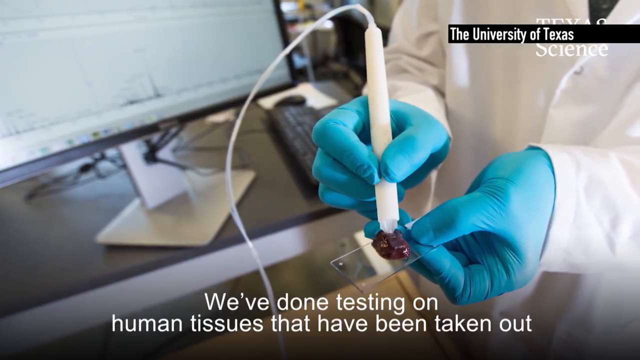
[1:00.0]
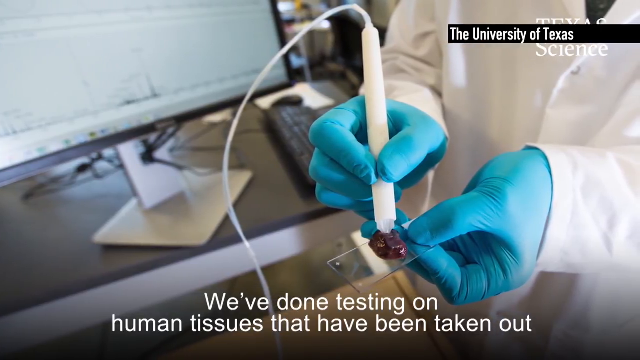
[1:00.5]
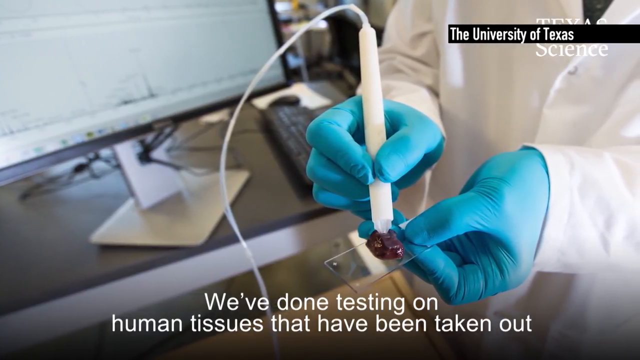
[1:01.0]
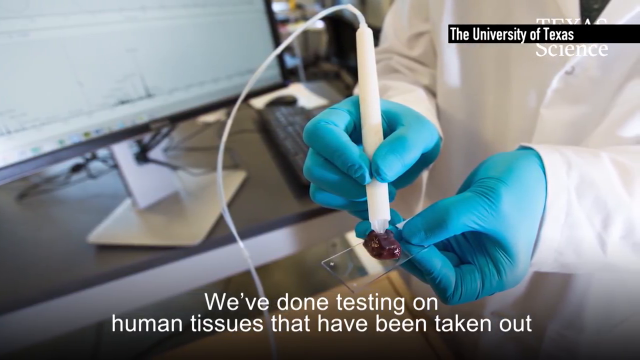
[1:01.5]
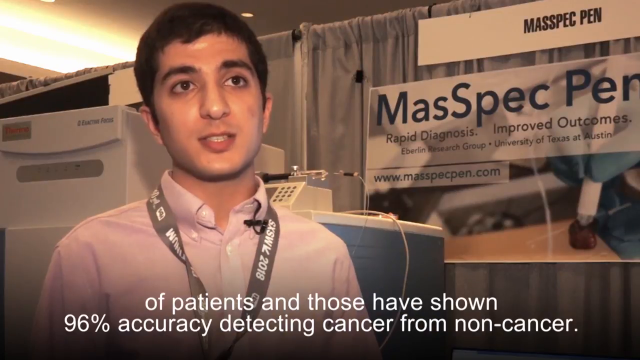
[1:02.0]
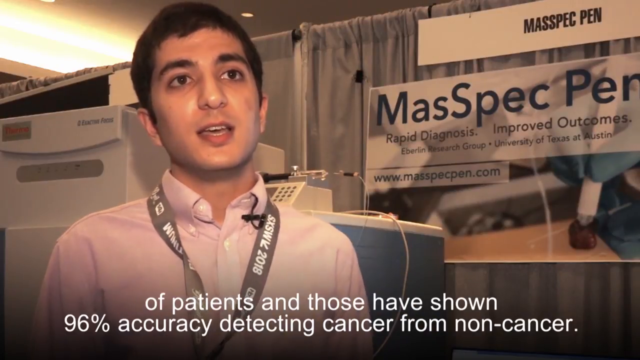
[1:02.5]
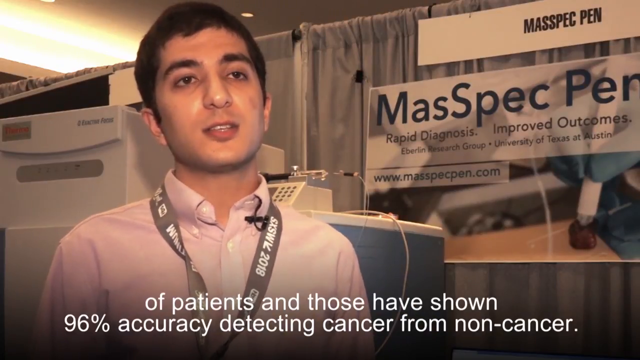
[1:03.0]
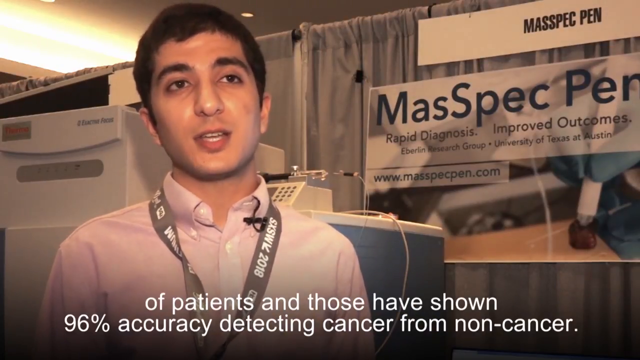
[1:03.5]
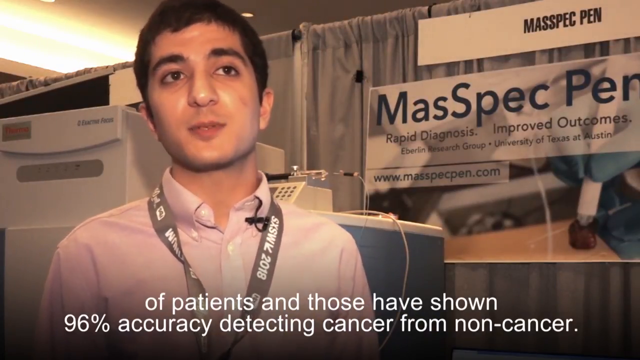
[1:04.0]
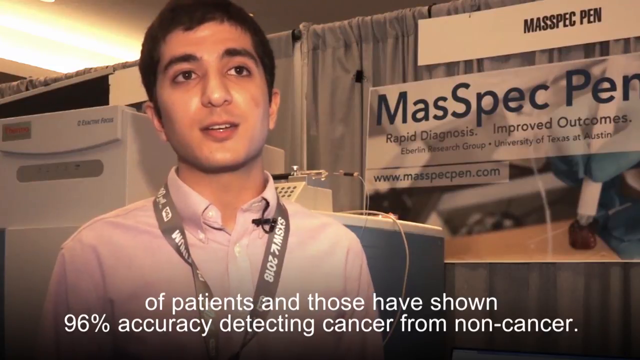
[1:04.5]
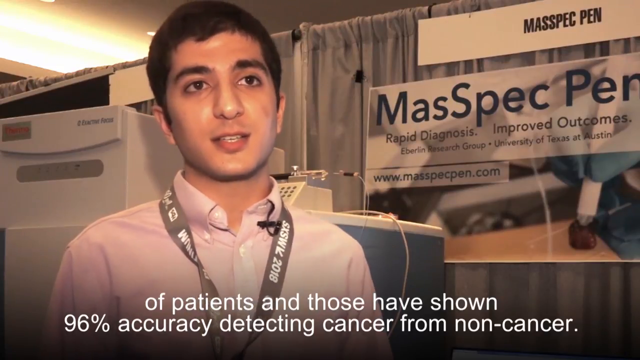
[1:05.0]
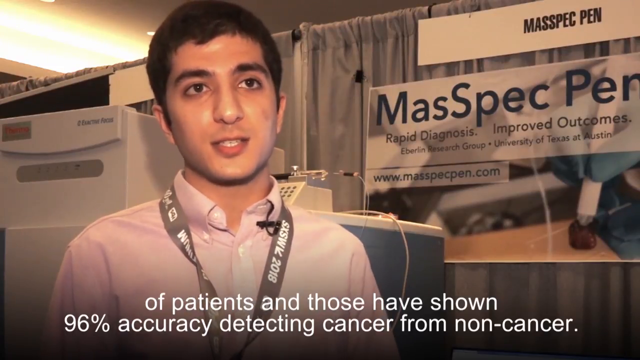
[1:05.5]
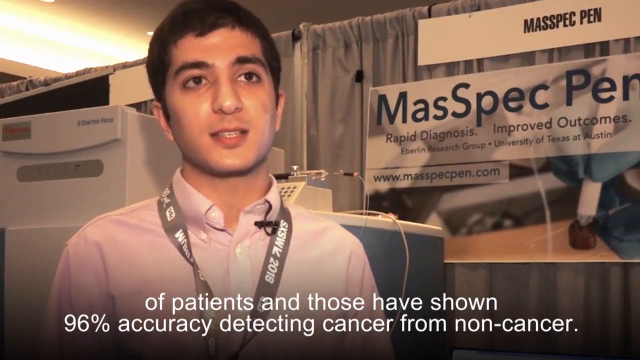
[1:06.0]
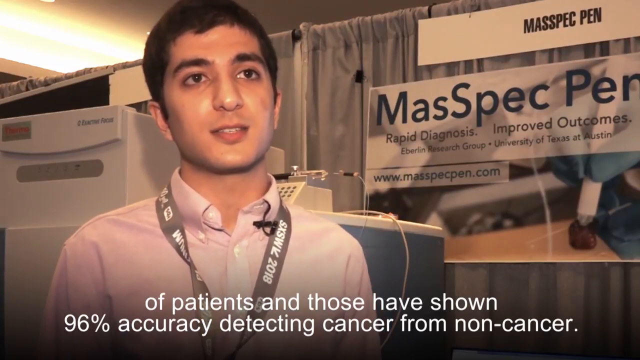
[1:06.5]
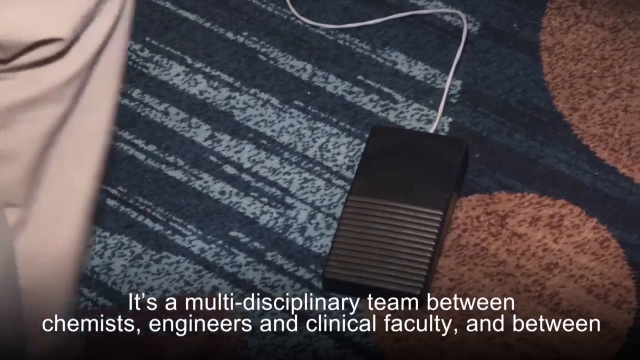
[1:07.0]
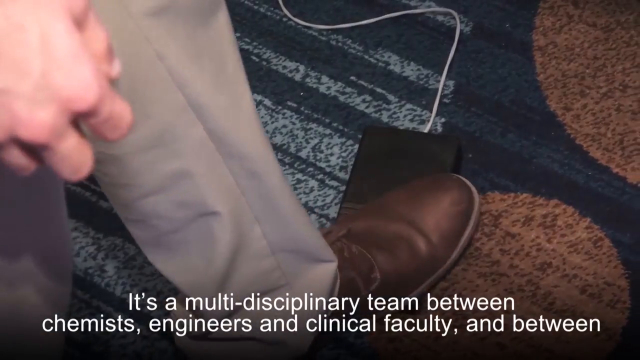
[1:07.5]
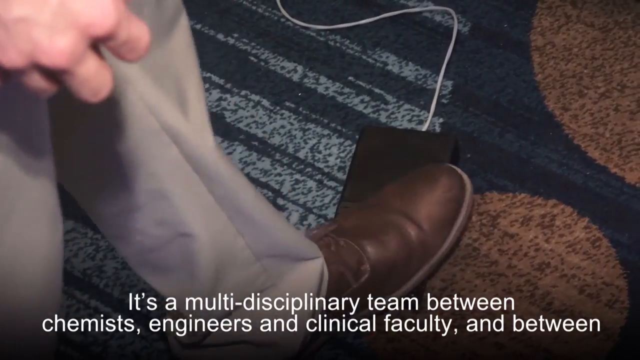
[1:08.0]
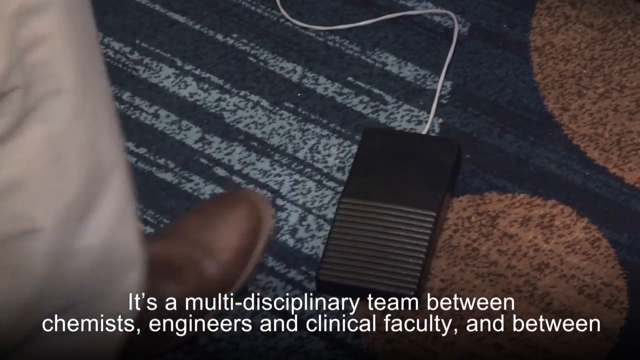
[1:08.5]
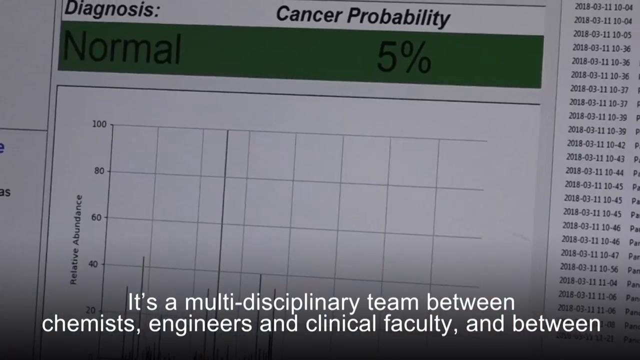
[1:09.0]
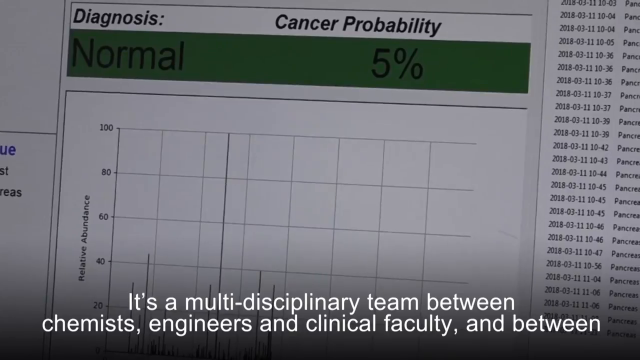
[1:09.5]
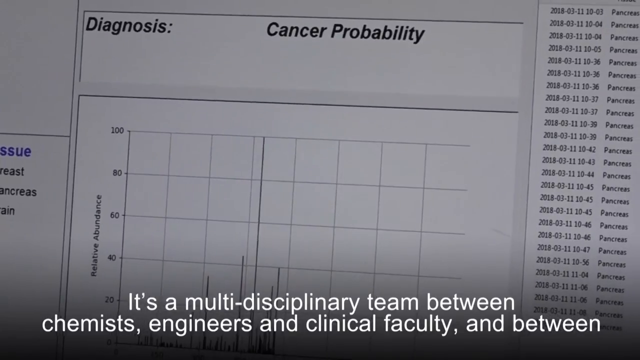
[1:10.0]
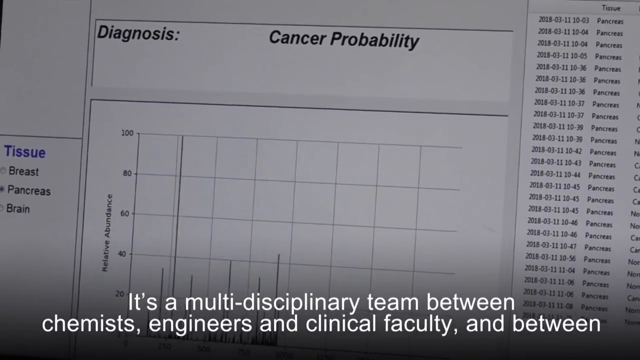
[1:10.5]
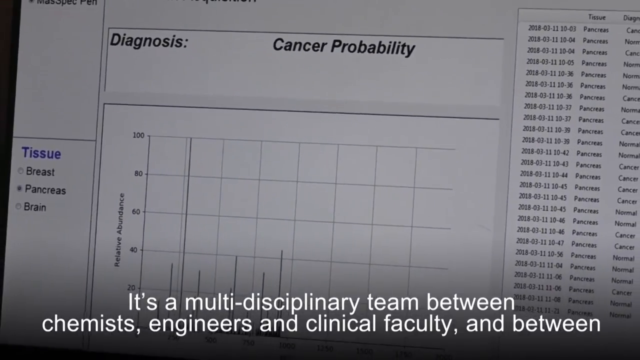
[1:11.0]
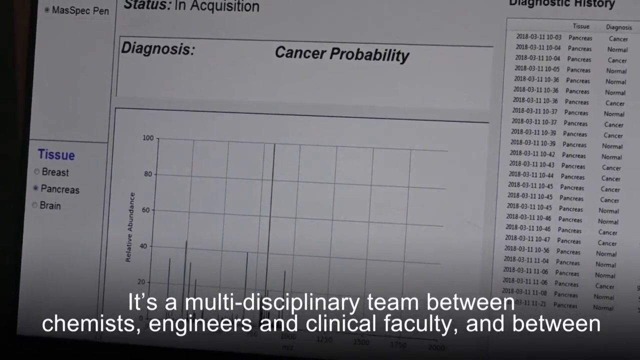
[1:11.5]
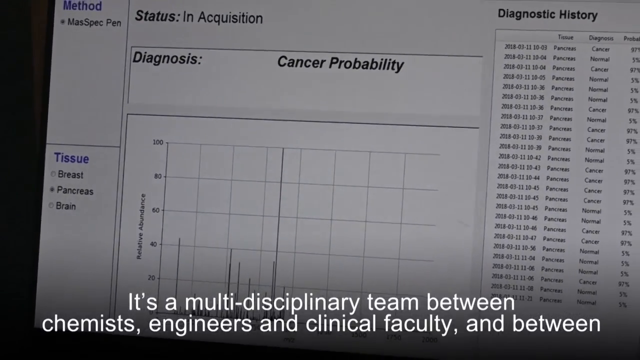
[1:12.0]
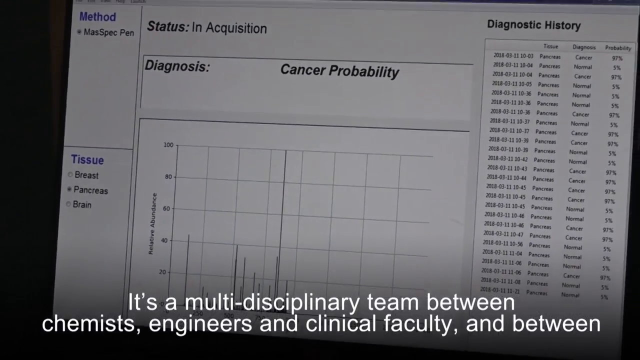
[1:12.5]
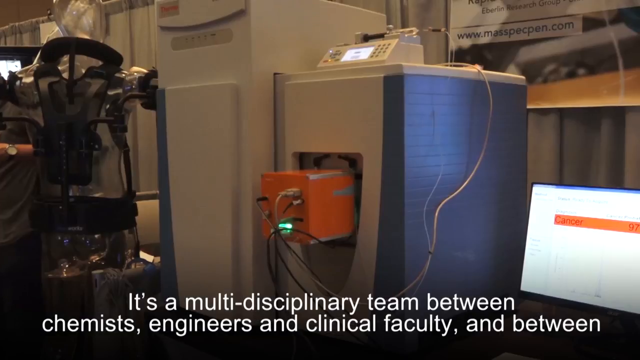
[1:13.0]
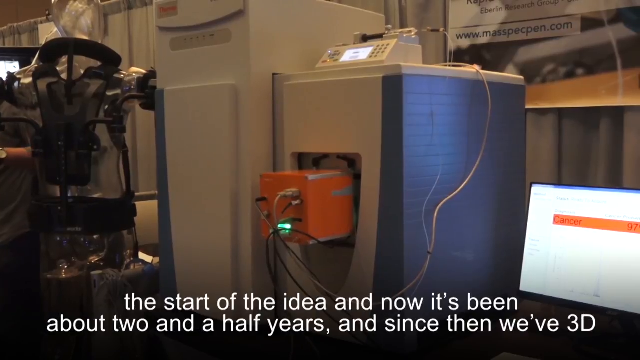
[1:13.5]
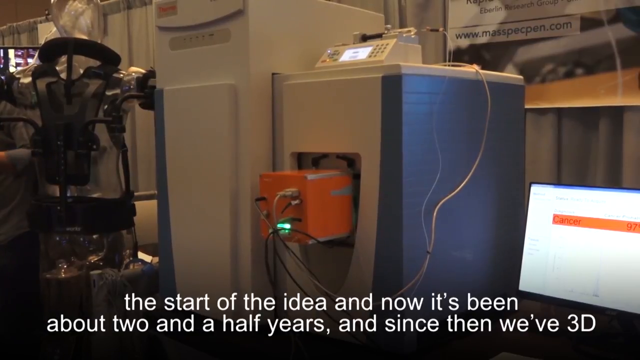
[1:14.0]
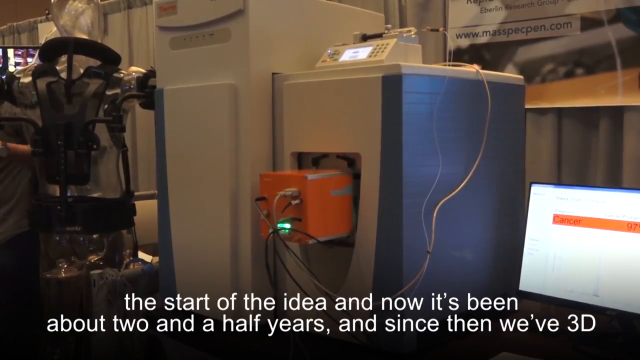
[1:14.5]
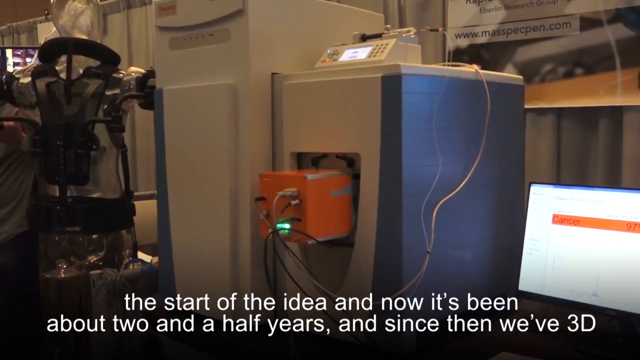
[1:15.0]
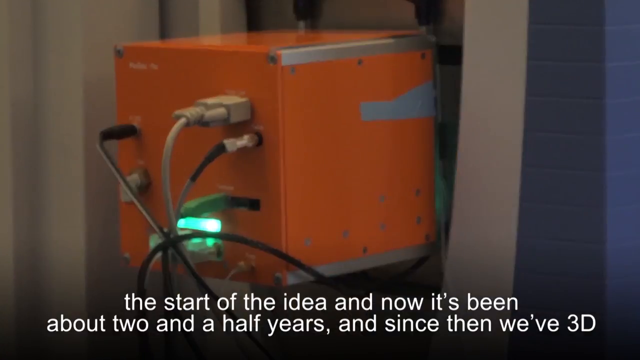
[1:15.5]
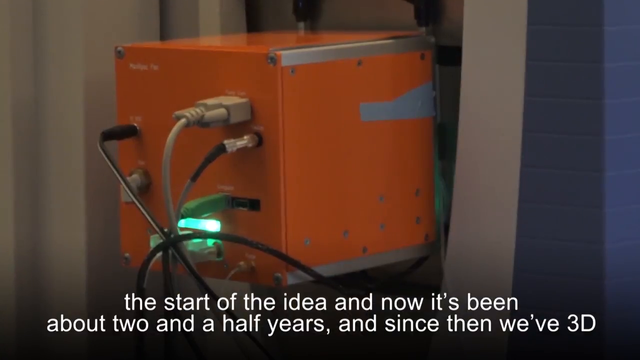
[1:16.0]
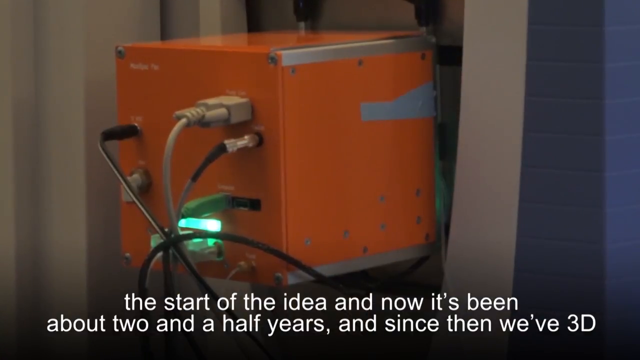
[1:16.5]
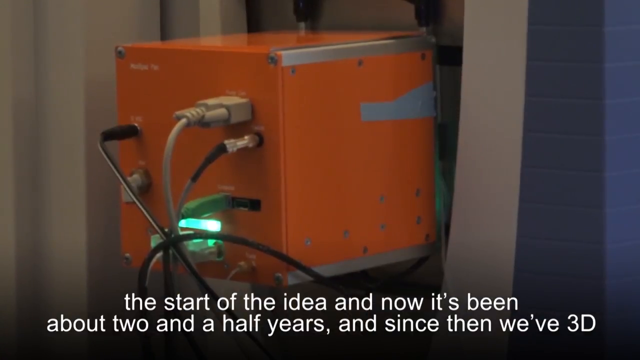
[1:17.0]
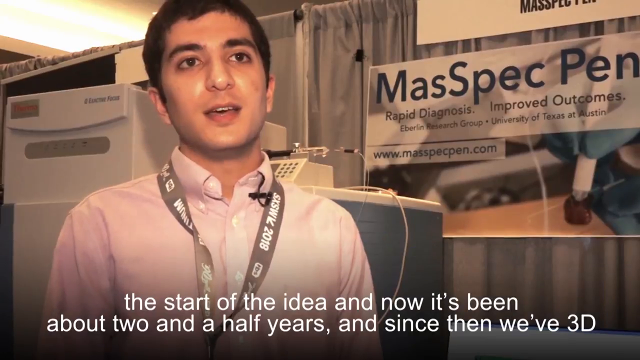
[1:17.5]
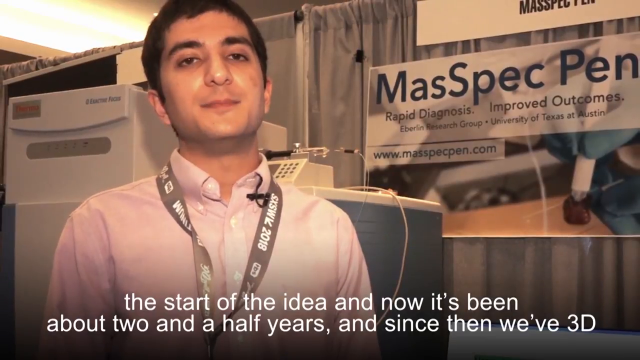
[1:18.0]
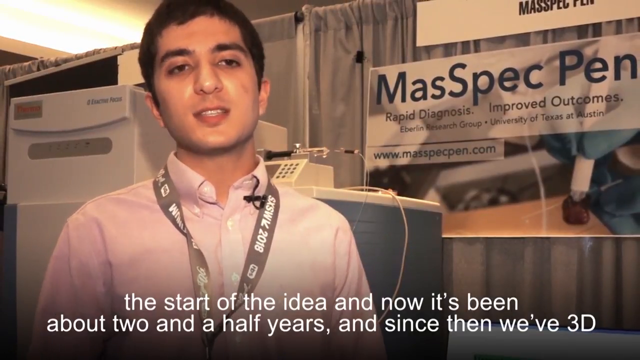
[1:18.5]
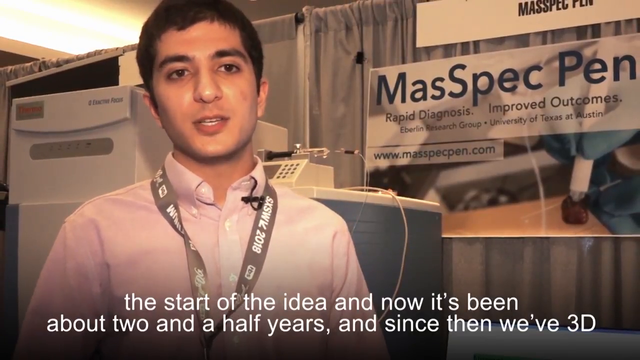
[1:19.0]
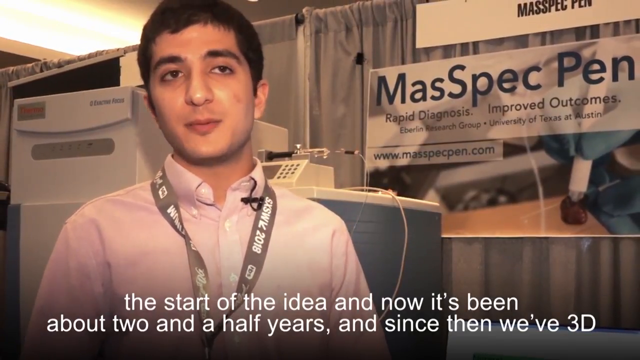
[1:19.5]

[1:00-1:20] A black box banner at the top right has white lettering reading "the University of Texas." Behind it, a person in a white lab coat and blue gloves holds a white pen with a white stem in his right hand and, in his left hand, a clear square glass piece with a small purple blob in the middle. The white lettering below says "we've done testing on human tissues that have been taken out." To the left there is a gray table with a gray square plate and a stem leading to a gray-framed monitor with a white screen. The view returns to the young man with brown skin and brown hair, wearing a light pink collared shirt with a grey strap over his neck bearing white lettering and numbers. Behind him is a grey machine, boxed, with some black lettering at the very front, and behind that a grey curtain. To the right, a white banner in black text says "Mass Spec Pen," and below it another banner says "Mass Spec Pen," then "Rapid Diagnosis, Improved Outcomes," and underneath, "Eberlin Research Group, University of Texas at Austin." A small blue banner on the far right with a white background reads "www.massspecpen.com." The white text below reads "of patients and those have shown 96% accuracy detecting cancer from non-cancer" as he speaks to the interviewer. Next, a greyish carpet with brown circles on the right is shown, with a black pad on the floor and a white cord. A pair of brown shoes and grey pants step onto the black pad, and the person's light brown hand is visible at the top left. The white lettering below says "it's a multidisciplinary team between chemist engineers and clinical faculty and between." The screen changes to the monitor, which has an off-white background. Black lettering in the center reads "diagnosis, cancer probability," with some dates and names in black text on the right. Toward the left are two gray boxes; the lower one reads "tissue" in blue, with "breast, pancreas, brain" in black below. There is a gray box in the center reading "relative abundance" on its left side, with numbers running down reading "180, 60, 40, 20" and some black lines running up and down just to the right. The text changes to "the start of the idea and now it's been about two and a half years and since then we've 3D." Next come off-white grayish boxes; the second box on the right has an orange box at the front with blue siding and some cords plugged into it. To the right is a black-outlined monitor with a white screen showing an orange box and red lettering that says "cancer 97%." The camera focuses in on the orange box with black and off-white cords attached to its front, and there is a bright teal-colored square section at the bottom. The view returns to the lightly brown-skinned young man on the left, with short brown hair, a light pink collared shirt and a gray strap over his neck. A grayish off-white box is on his left side, and the blue box is just behind his left shoulder. There is a gray curtain at the top, and a white banner at the top right reads "Mass Spec Pen" in black lettering. The off-white banner below it reads "Mass Spec Pen" in blue lettering, with black text below reading "Rapid Diagnosis, Improved Outcomes," then "Eberlin Research Group, University of Texas at Austin," and below that in blue text "www.massspecpen.com."